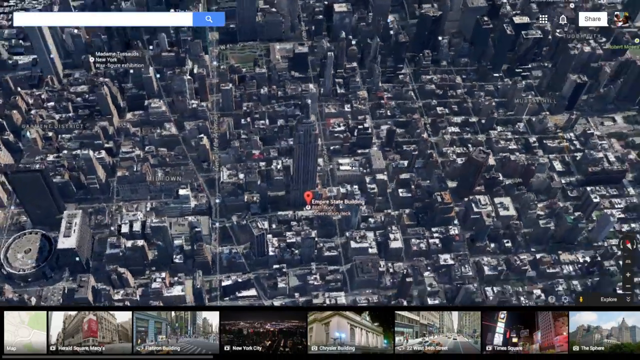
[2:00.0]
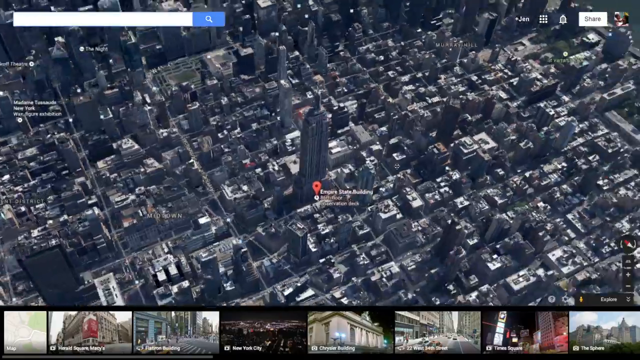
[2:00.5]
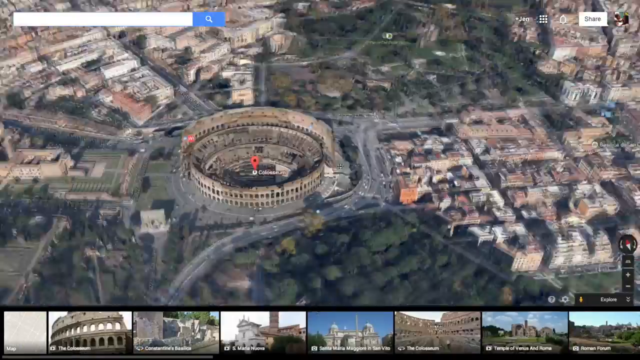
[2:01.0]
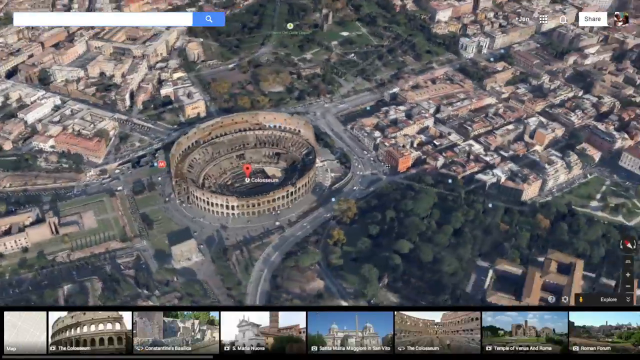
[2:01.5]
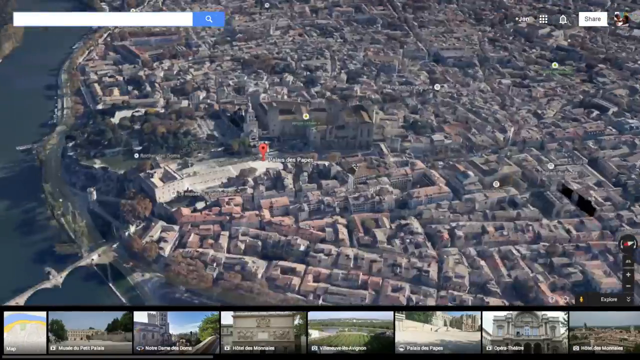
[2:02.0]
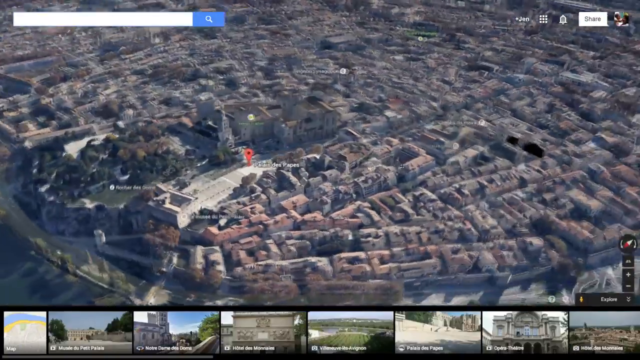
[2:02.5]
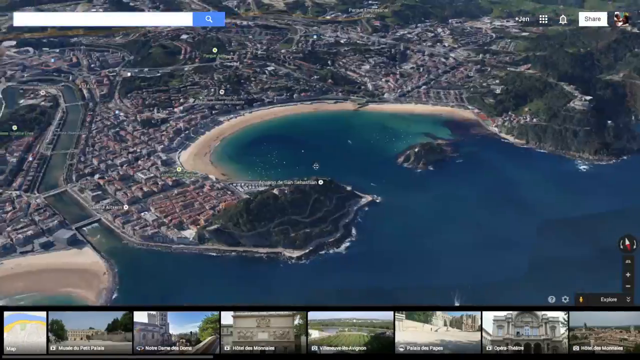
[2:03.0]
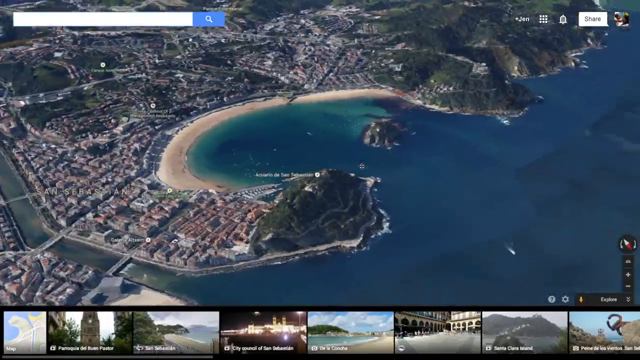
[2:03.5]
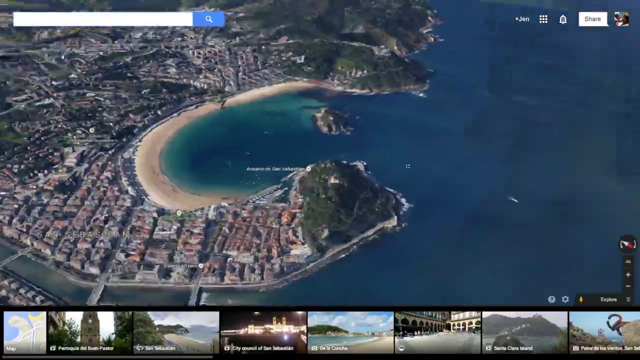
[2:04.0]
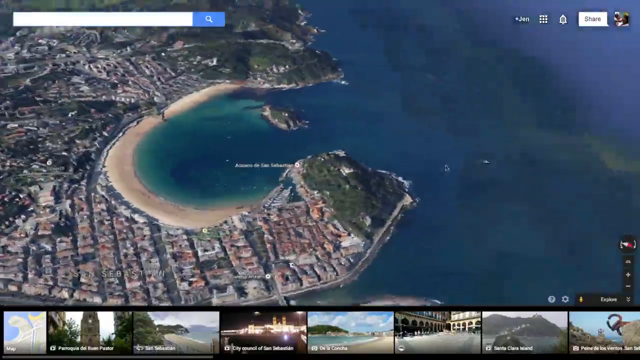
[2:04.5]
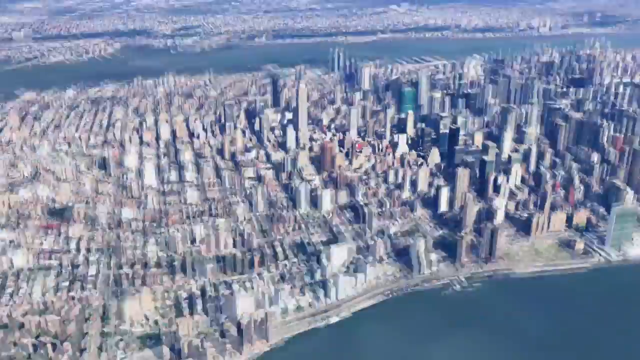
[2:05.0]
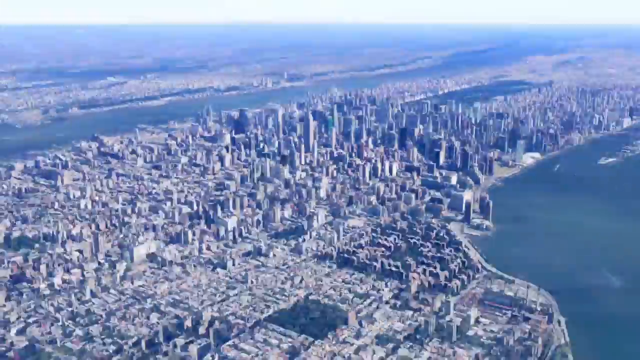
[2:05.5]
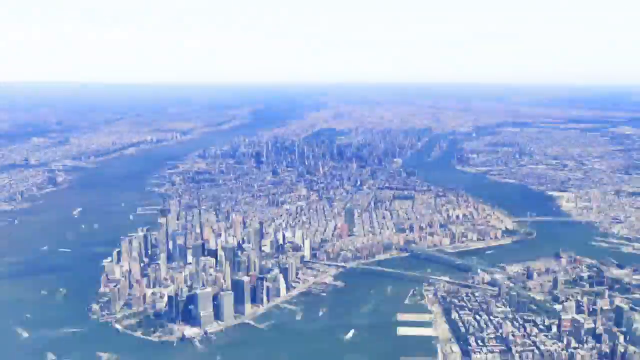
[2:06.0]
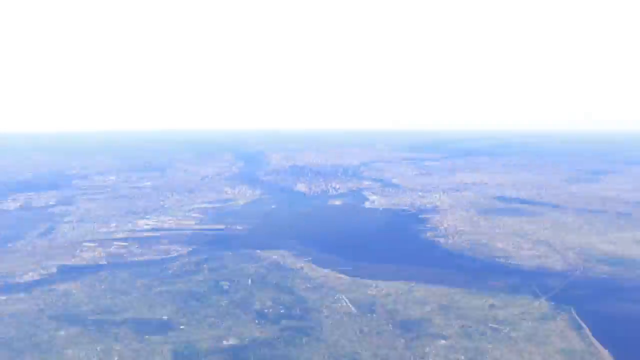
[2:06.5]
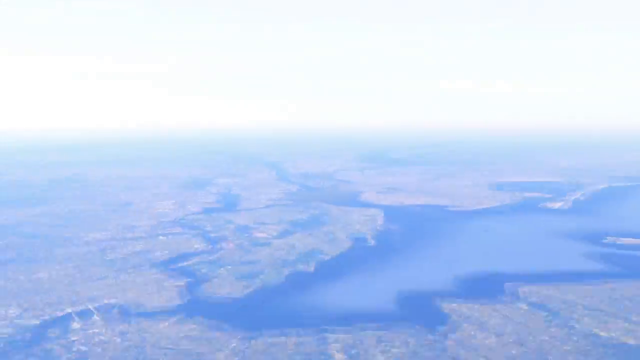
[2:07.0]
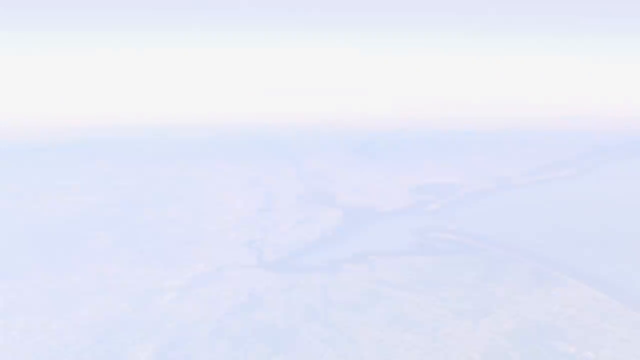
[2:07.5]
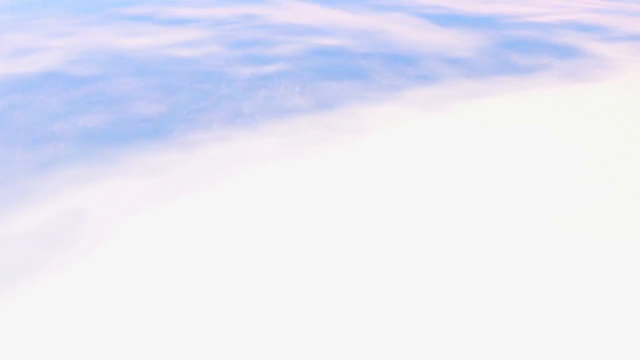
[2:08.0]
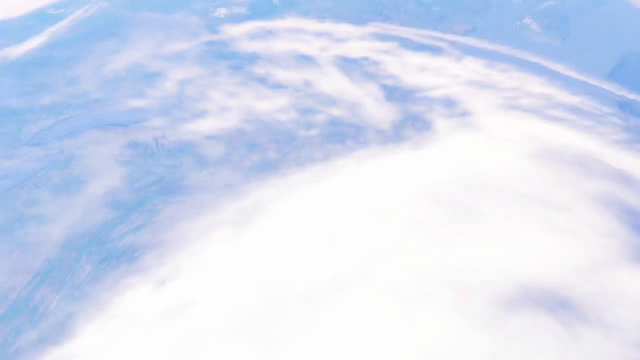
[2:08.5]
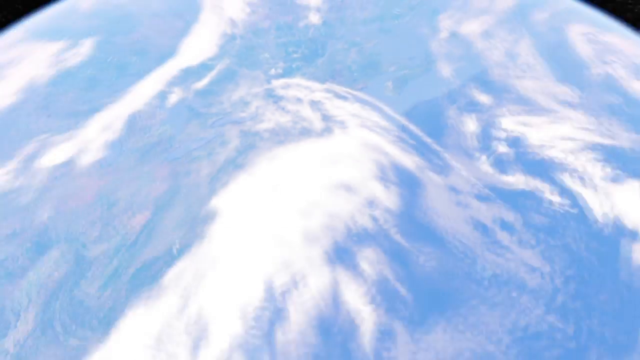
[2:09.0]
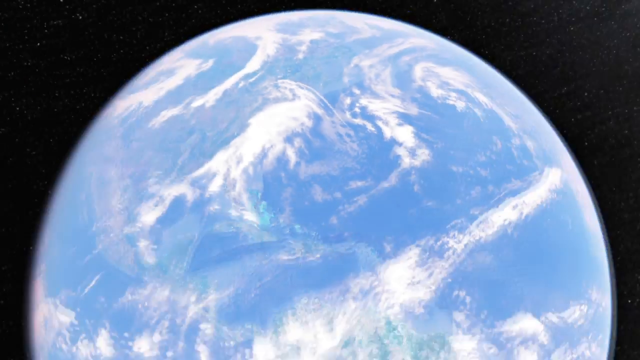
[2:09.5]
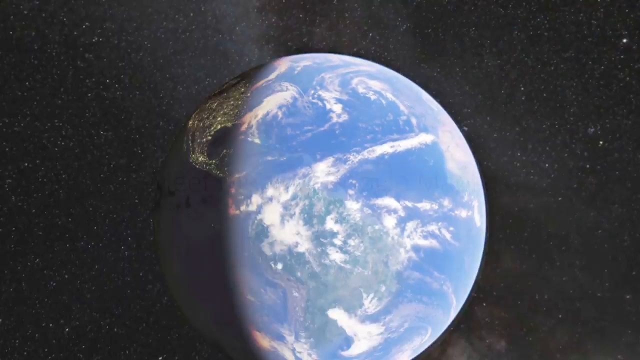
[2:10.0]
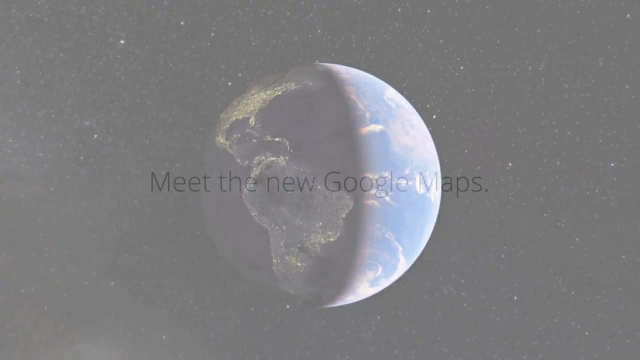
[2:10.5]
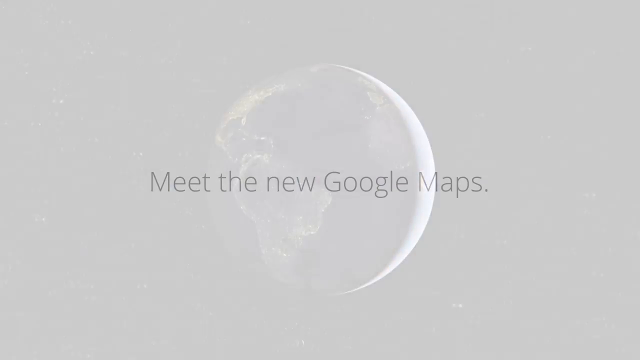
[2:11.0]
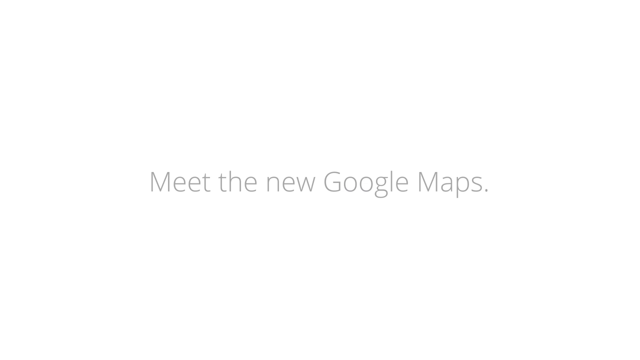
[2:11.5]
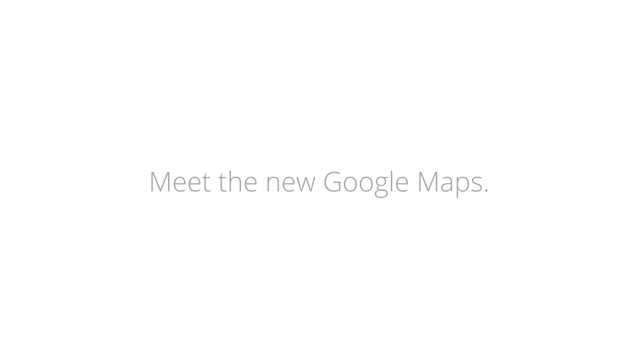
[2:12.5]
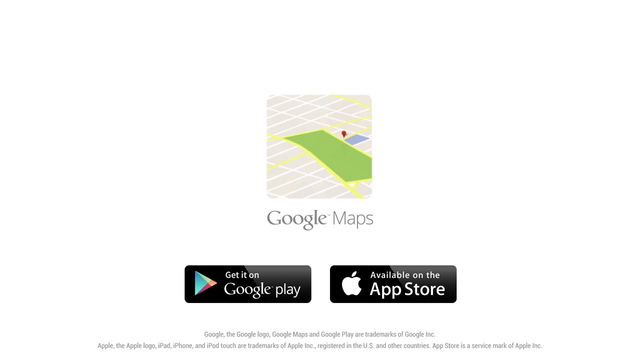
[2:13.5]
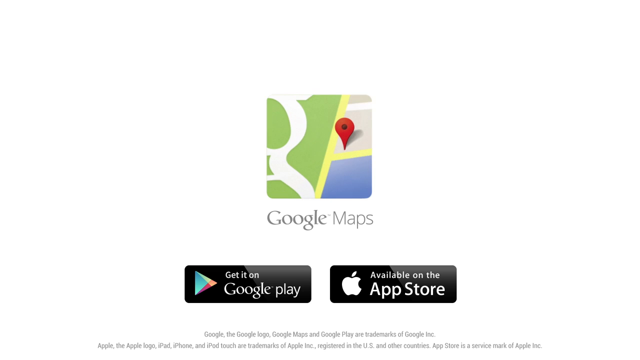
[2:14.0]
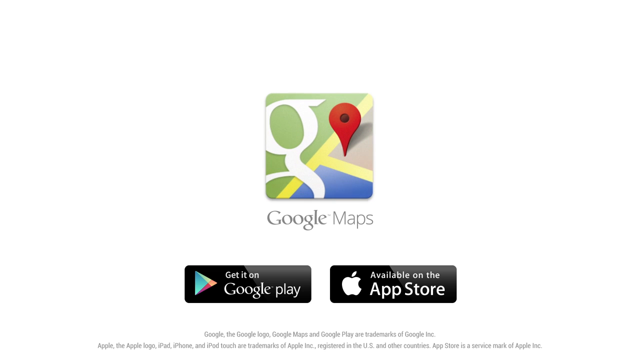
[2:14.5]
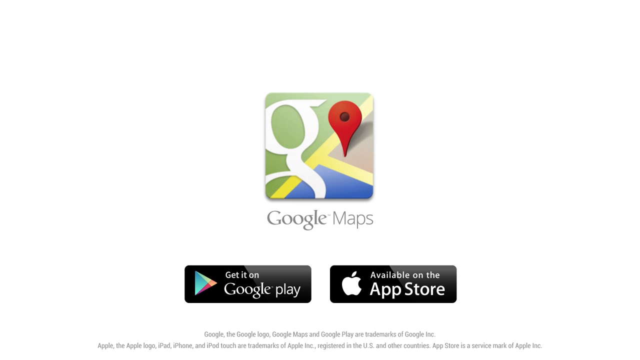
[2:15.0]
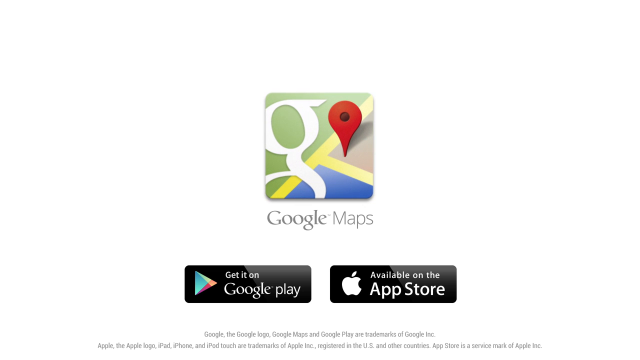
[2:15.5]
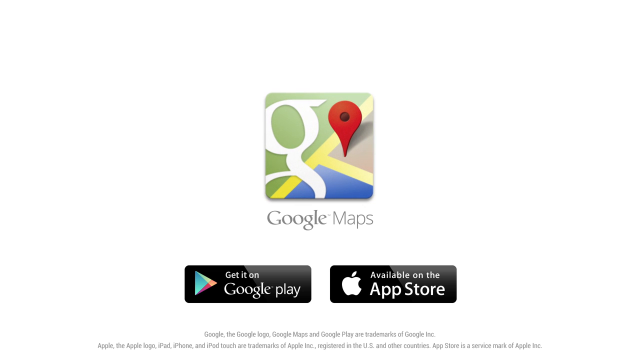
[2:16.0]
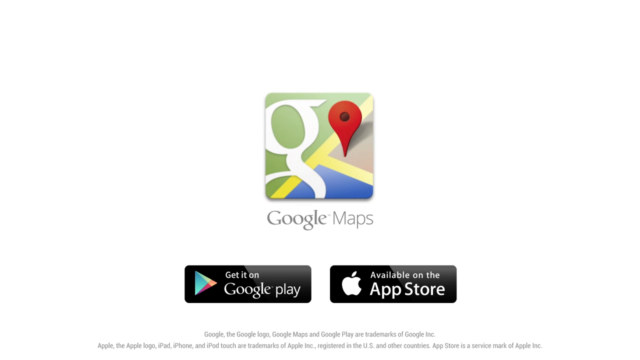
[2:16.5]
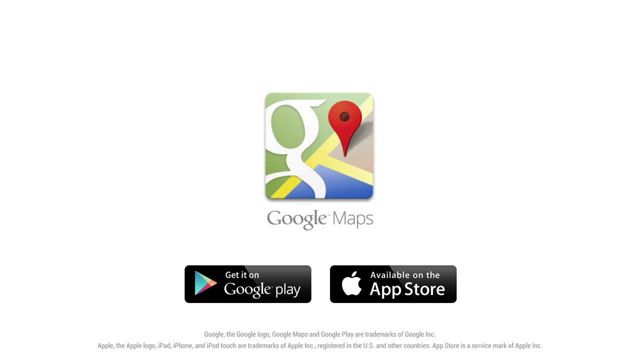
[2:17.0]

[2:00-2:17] An overhead aerial Earth shot starts from what looks like a skyscraper in New York City, then appears to pan out a little into what looks like a coliseum in Europe, then some other city, then a beach area, showing different parts of the world, especially Europe and New York. It then zooms massively out from Earth into space, where the Earth is seen, with the text "meet the new Google Maps." An image of Google Maps appears with the text "Google Maps" and an icon, along with two little icons reading "Get it on Google Play" and "available on the App Store."